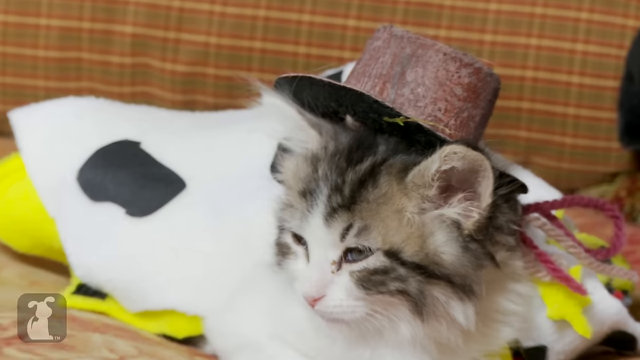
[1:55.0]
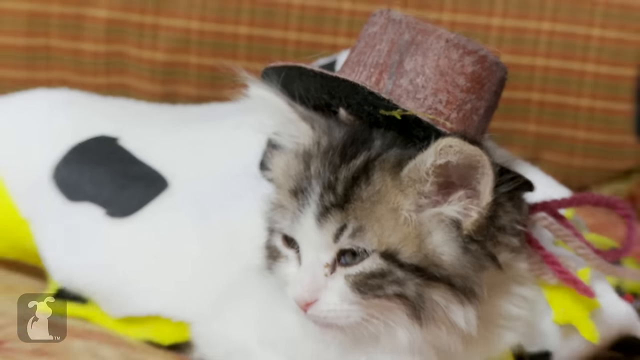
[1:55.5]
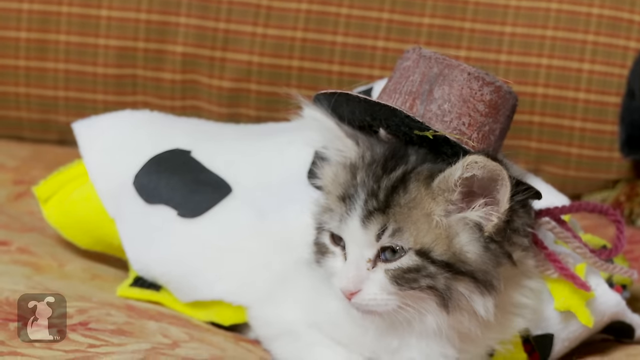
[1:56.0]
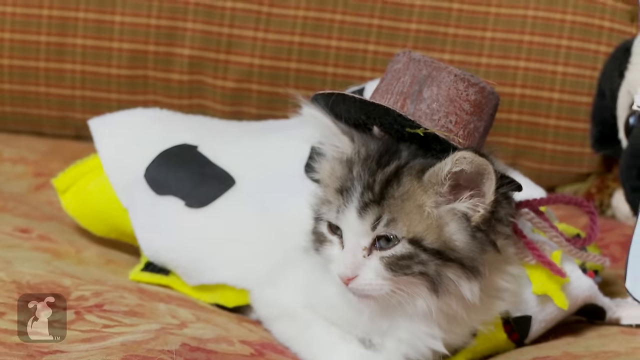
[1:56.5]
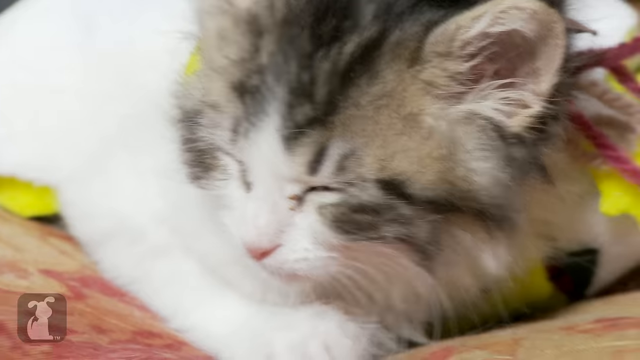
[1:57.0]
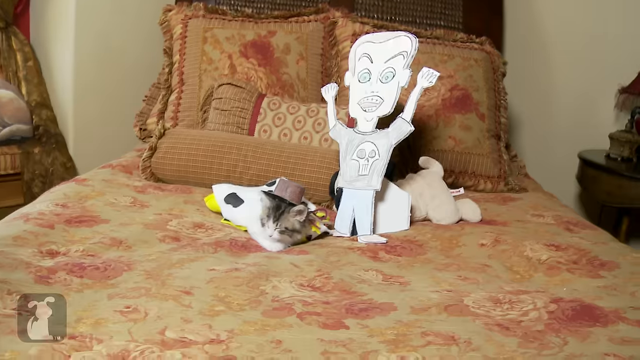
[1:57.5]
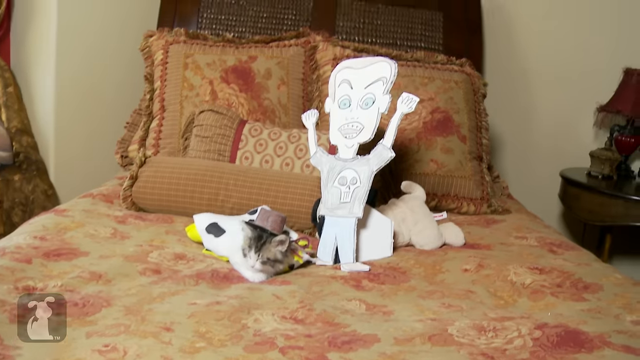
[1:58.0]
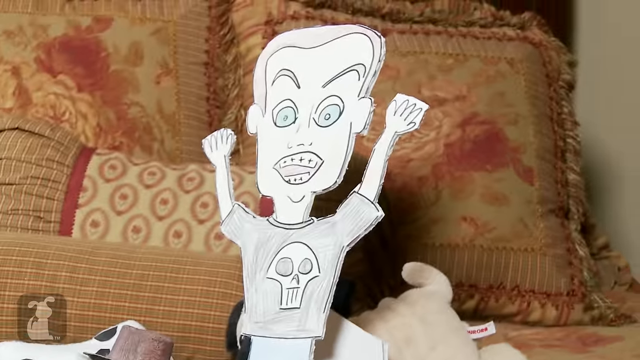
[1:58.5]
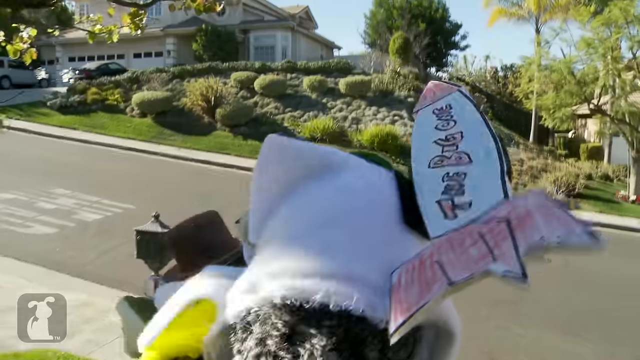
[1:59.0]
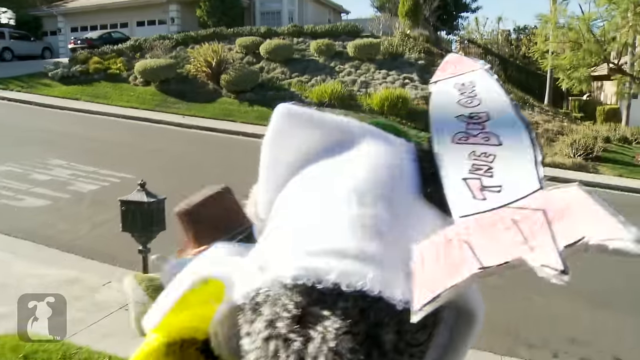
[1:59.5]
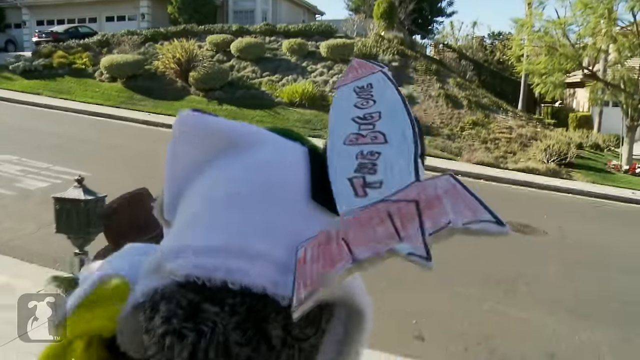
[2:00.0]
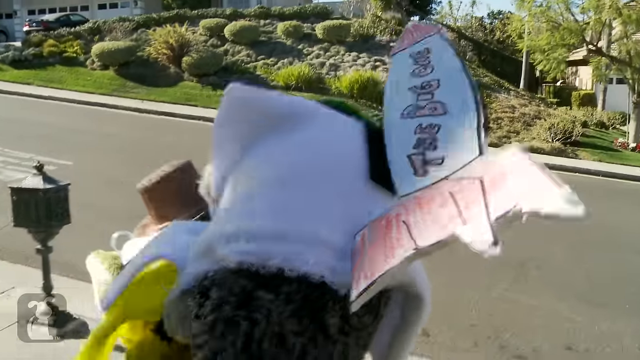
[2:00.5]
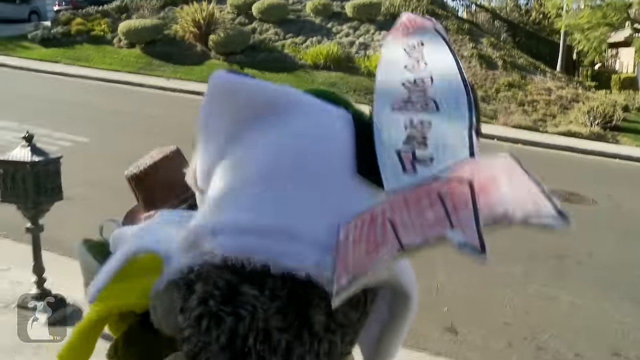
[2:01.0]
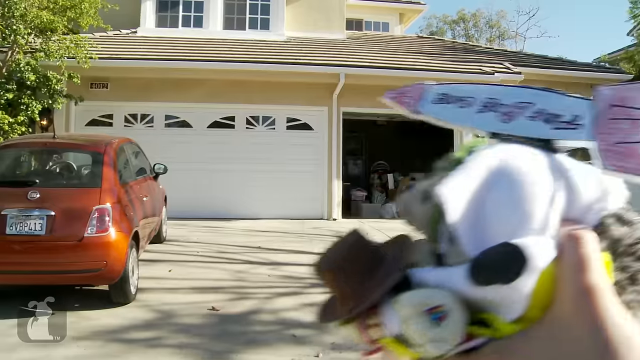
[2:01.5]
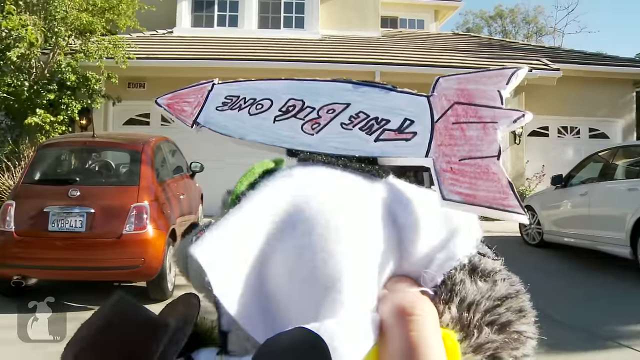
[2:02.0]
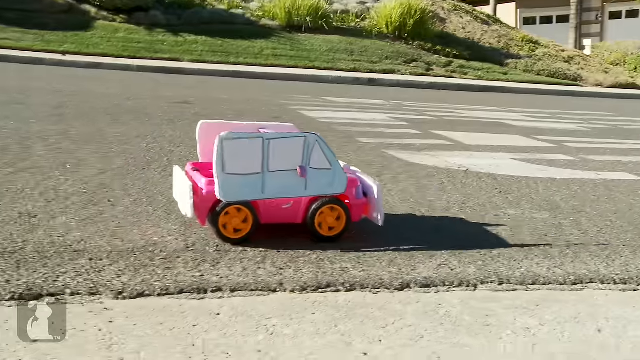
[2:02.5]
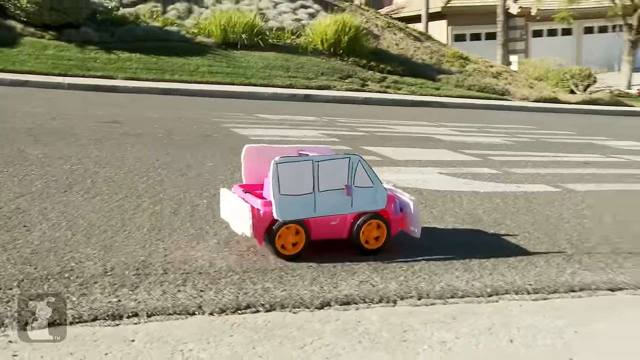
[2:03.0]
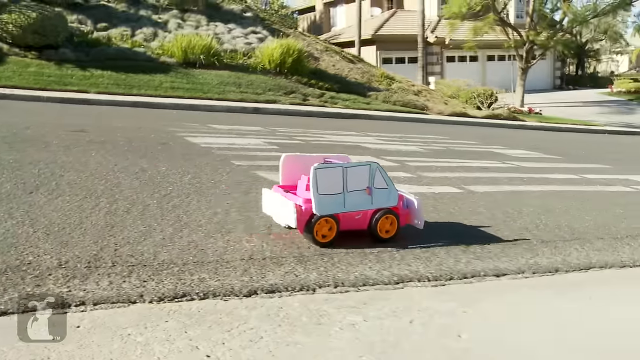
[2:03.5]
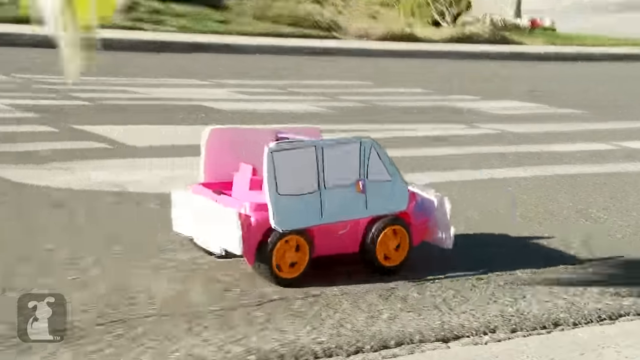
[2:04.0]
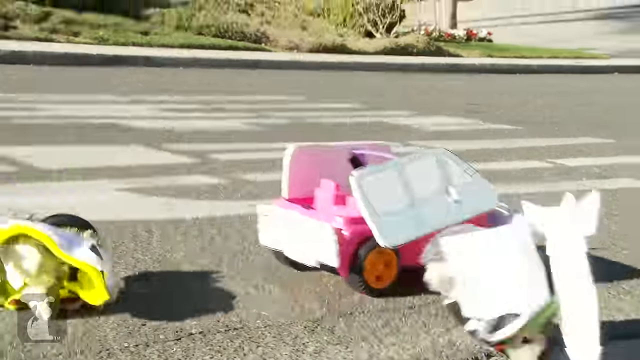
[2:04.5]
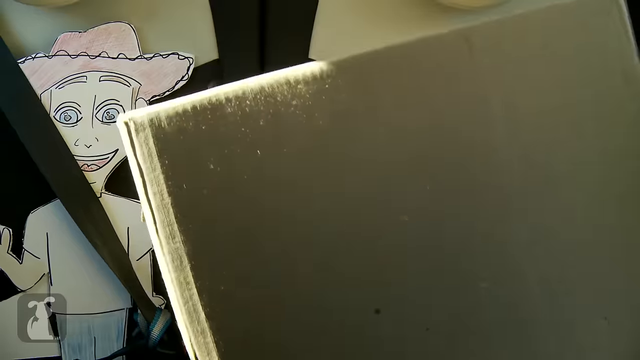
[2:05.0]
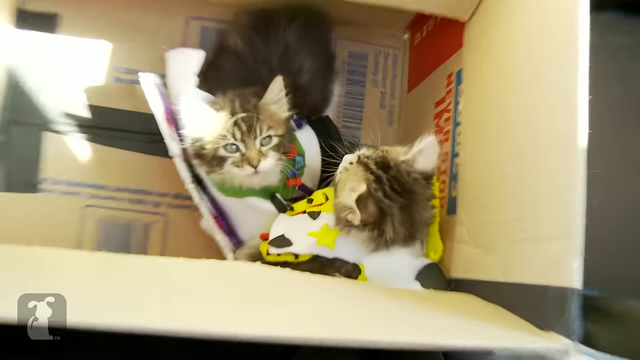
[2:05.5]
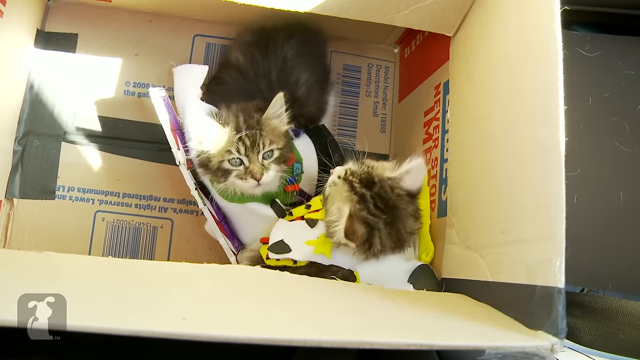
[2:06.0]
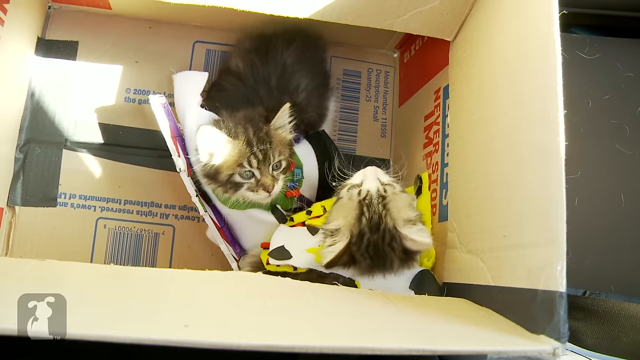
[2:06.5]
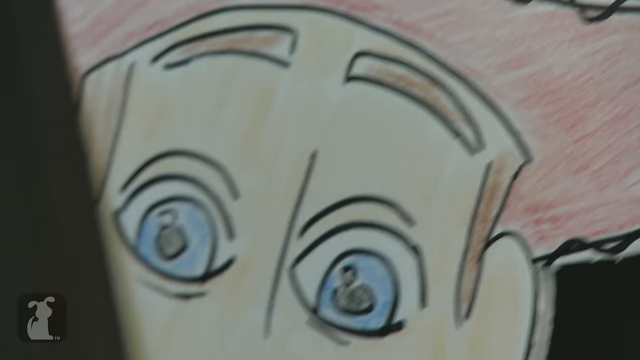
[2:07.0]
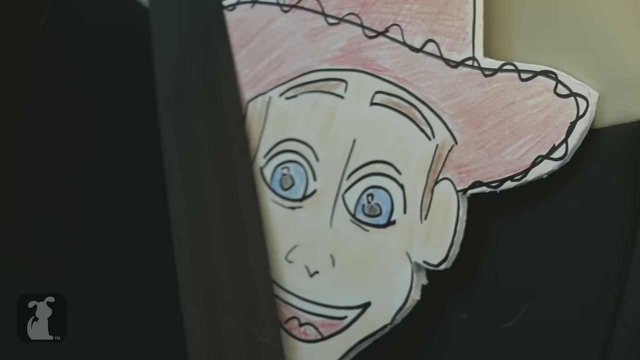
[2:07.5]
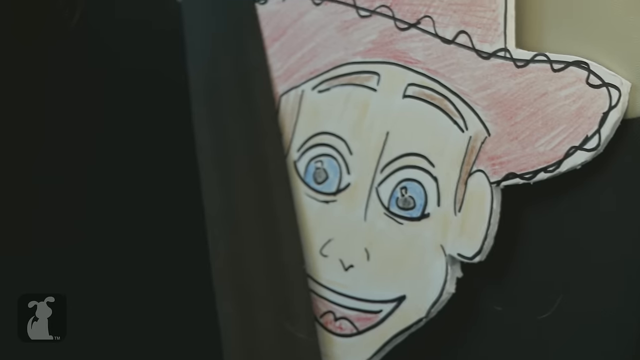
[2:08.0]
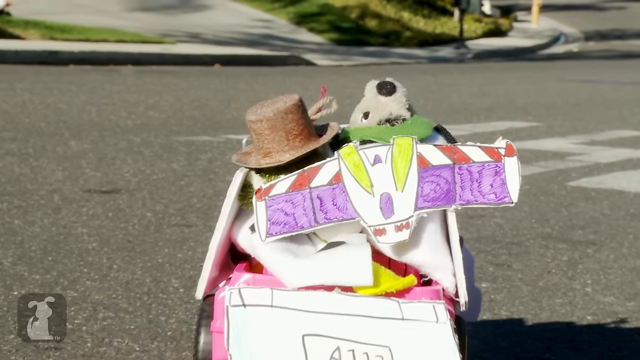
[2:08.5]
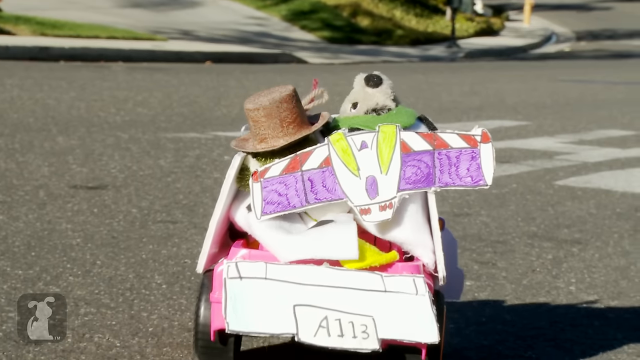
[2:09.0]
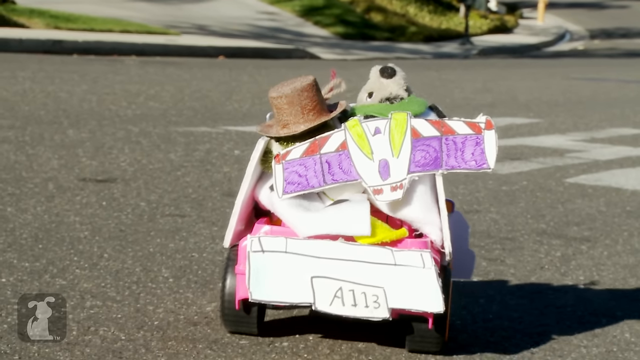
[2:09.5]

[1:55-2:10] The cardboard cutout Toy World character apparently wants to go on a trip. The kitten wearing the hat manages to keep the hat on its head. The camera then cuts to a scene where it looks like the furry critters are being carried outside, though they are obviously fake animals, not the actual kittens. A pink plastic car is seen moving down the road, and just after, the two fake kittens are thrown out into the middle of the road. Then the two kittens are packed into large cardboard warehouse-type boxes, with only their little faces visible.